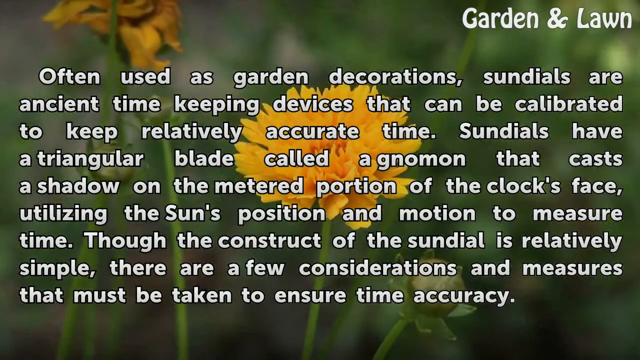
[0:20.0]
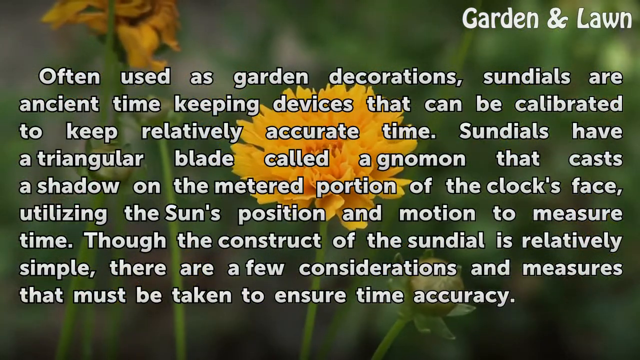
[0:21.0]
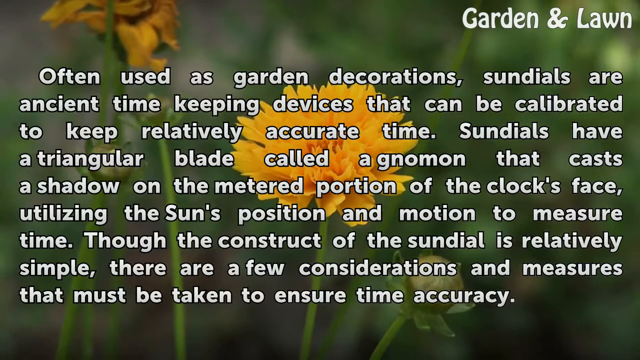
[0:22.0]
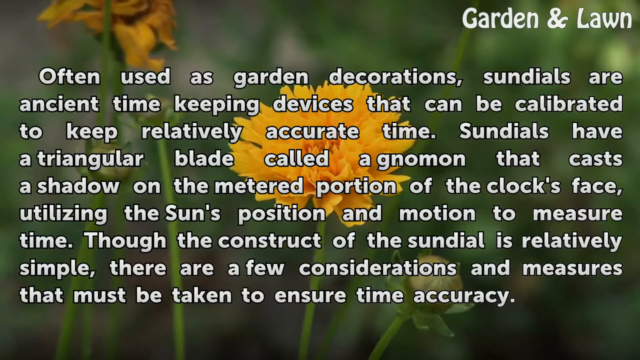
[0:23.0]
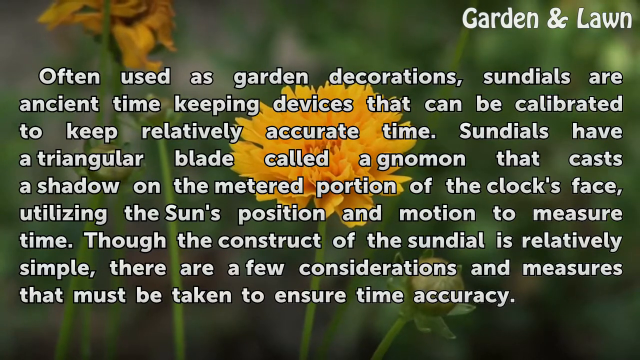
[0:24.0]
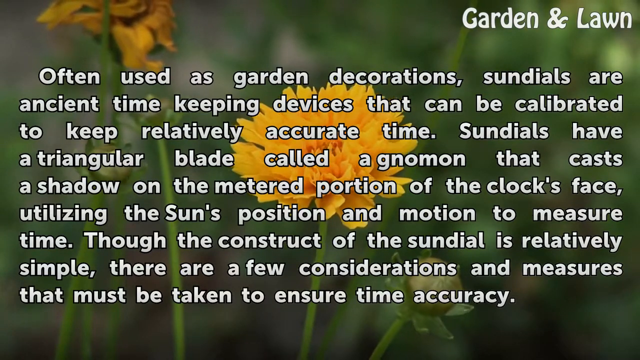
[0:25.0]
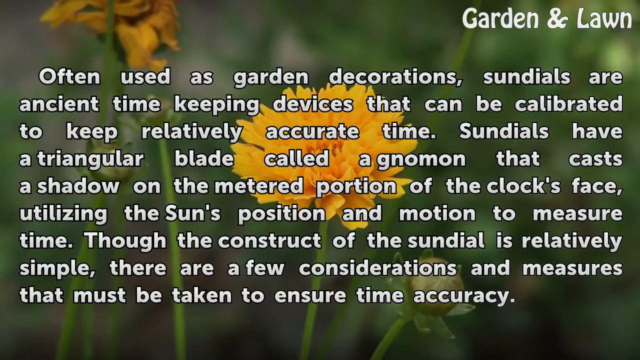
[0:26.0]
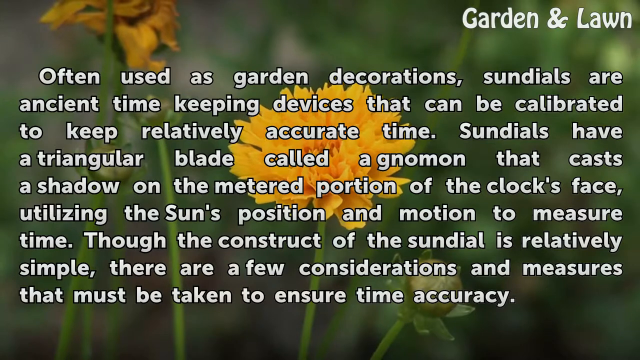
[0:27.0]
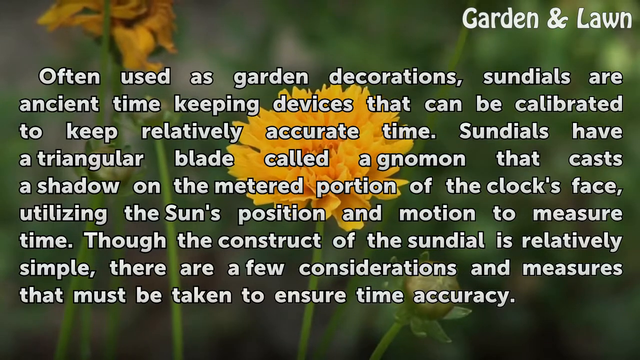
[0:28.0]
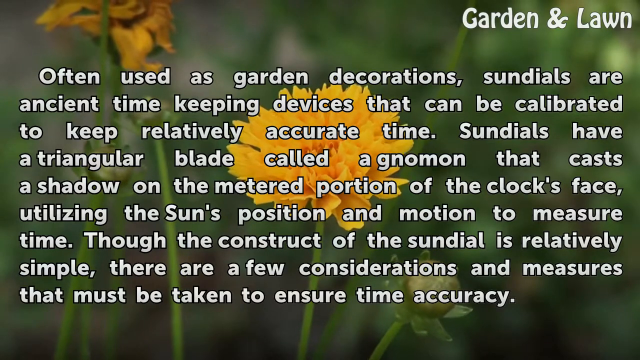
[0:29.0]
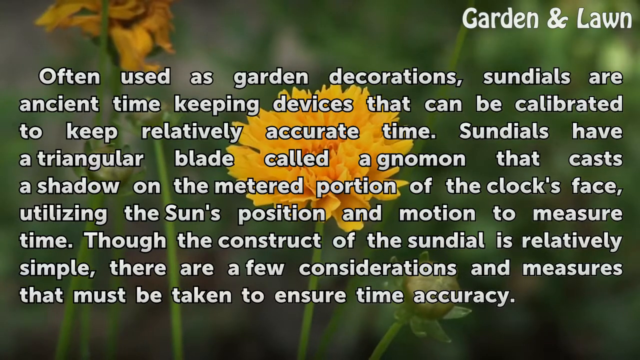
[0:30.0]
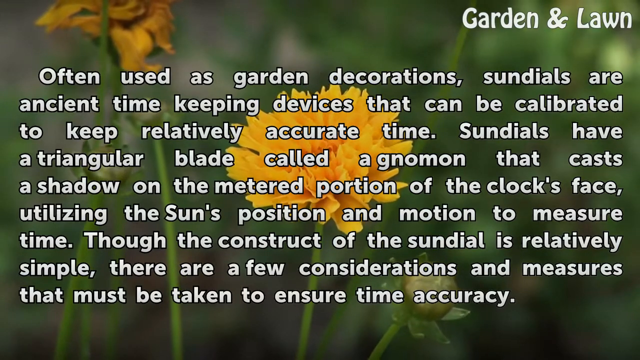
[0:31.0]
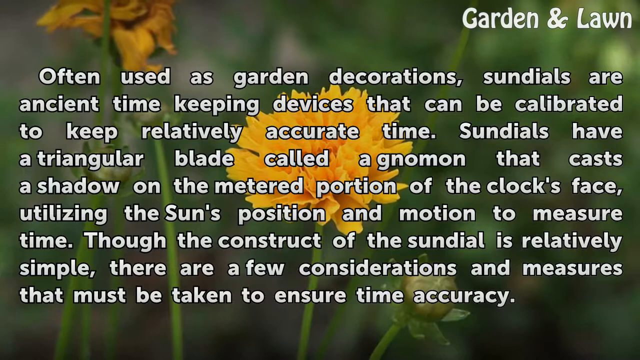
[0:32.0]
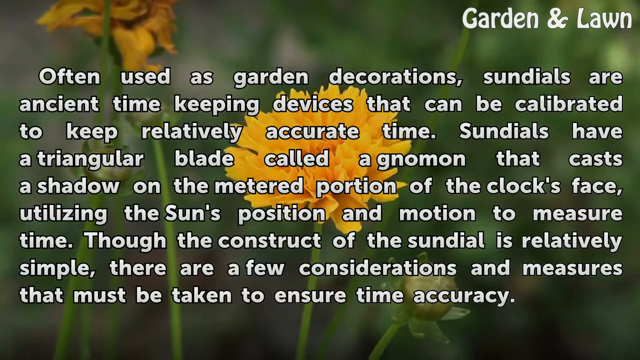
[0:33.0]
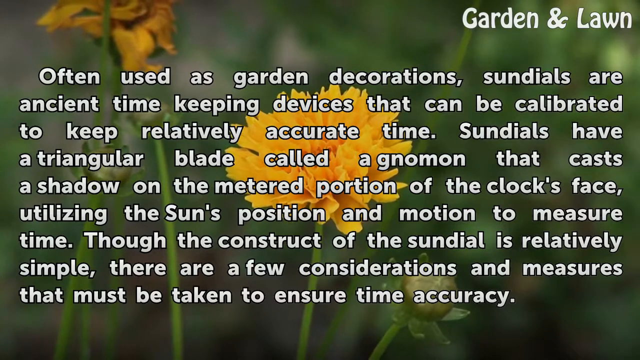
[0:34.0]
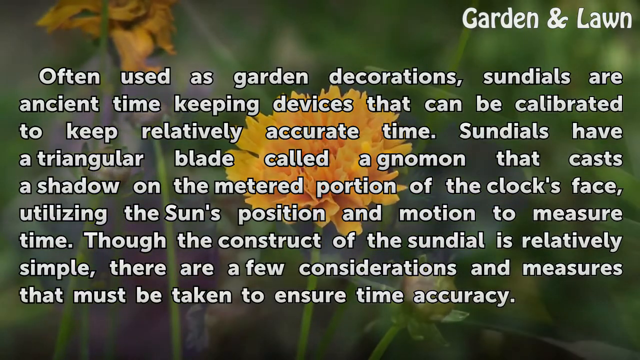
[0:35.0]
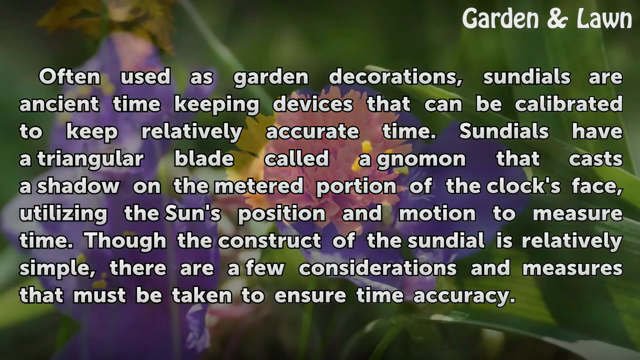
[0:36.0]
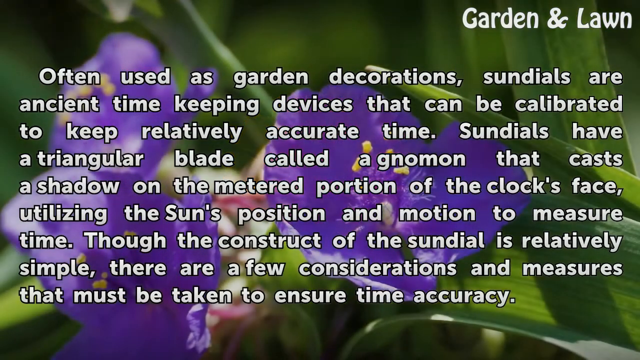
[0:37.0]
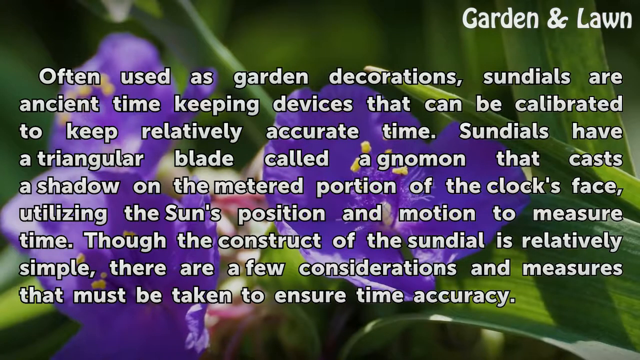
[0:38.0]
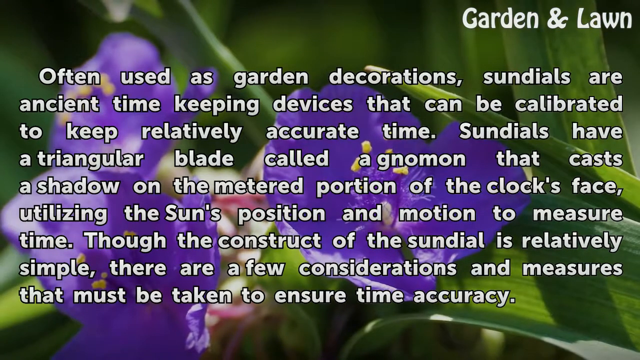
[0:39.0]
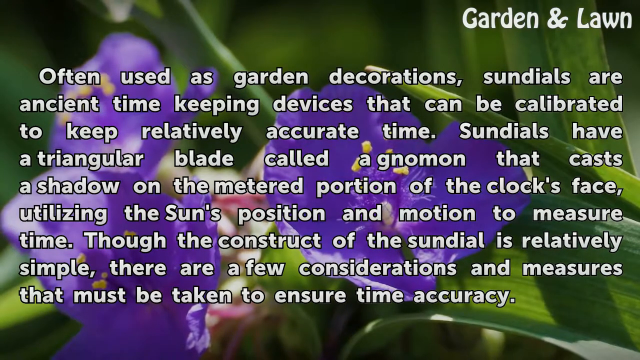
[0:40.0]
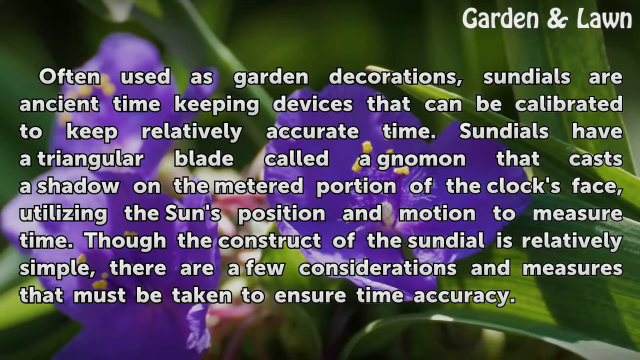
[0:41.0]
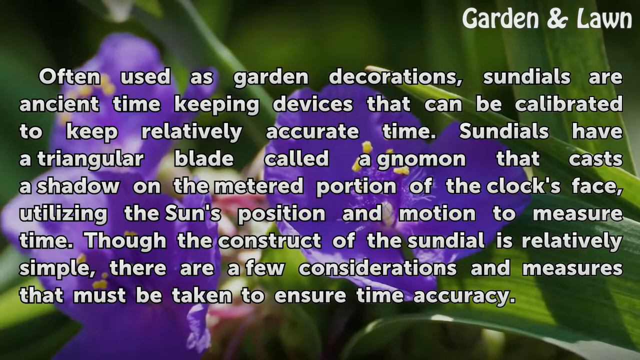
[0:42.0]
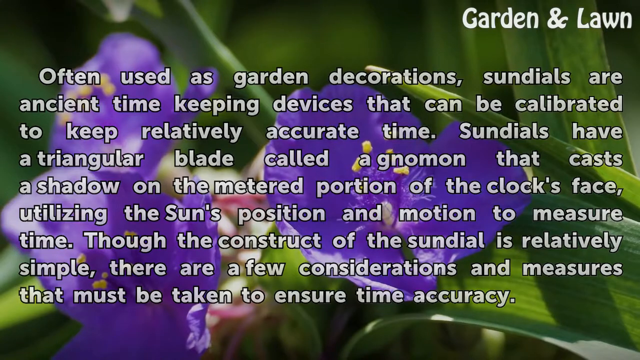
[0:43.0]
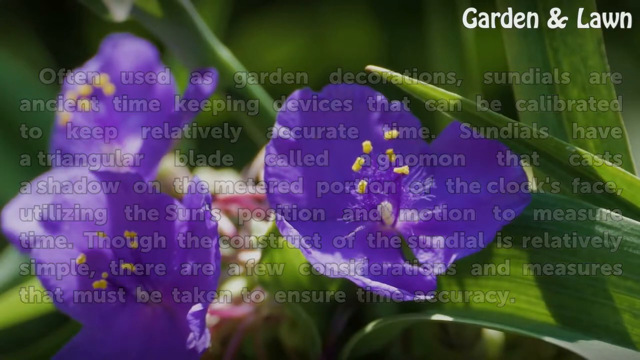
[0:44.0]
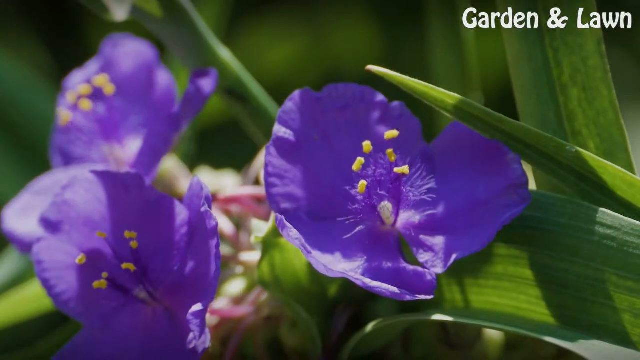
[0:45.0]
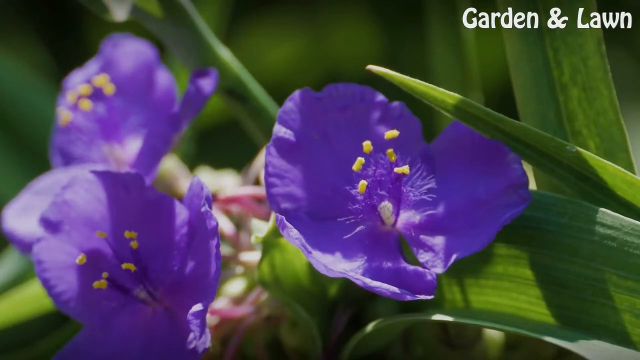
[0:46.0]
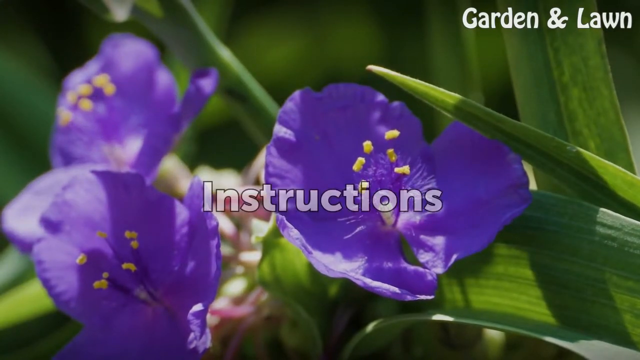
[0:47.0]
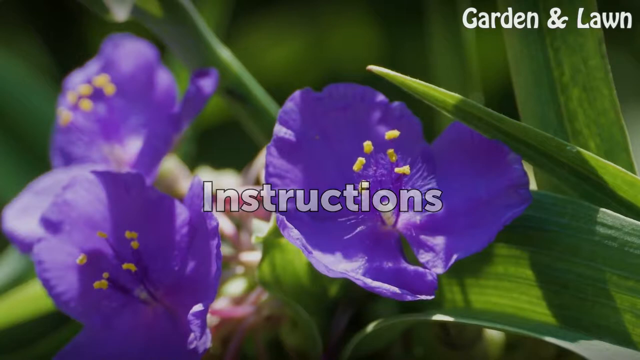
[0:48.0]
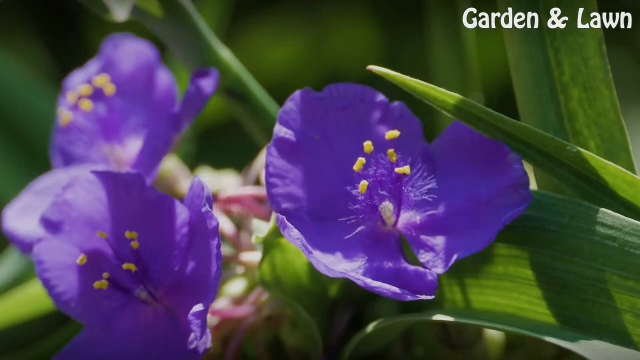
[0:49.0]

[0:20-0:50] The information about the sundial continues: it uses the sun's position and motion to measure time, and a few considerations and measures must be taken to ensure time accuracy. The sundial uses a blade to create a shadow. The sundial's uses are presented as going beyond decoration and landscaping.